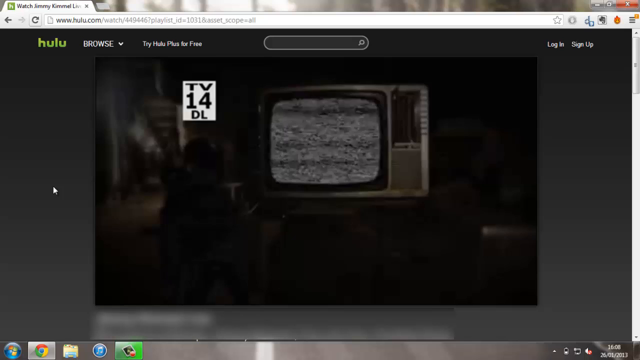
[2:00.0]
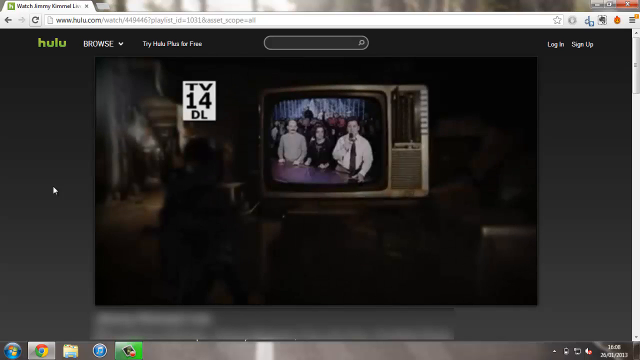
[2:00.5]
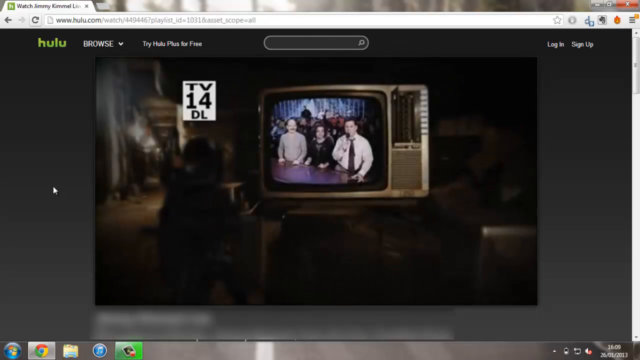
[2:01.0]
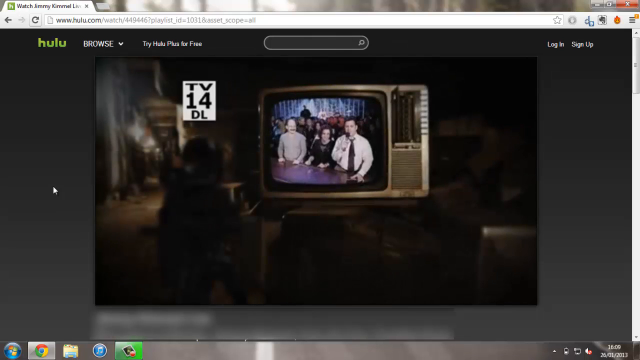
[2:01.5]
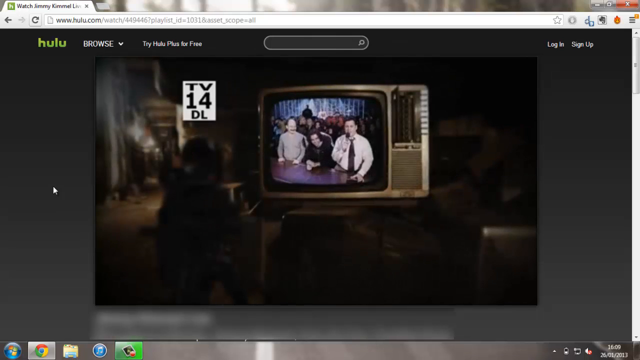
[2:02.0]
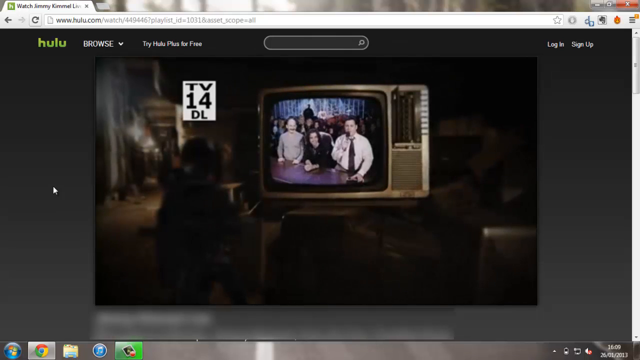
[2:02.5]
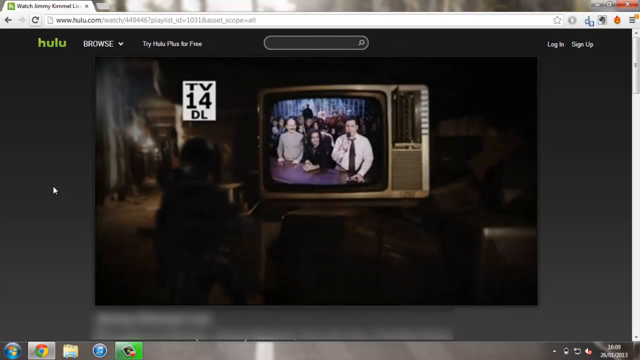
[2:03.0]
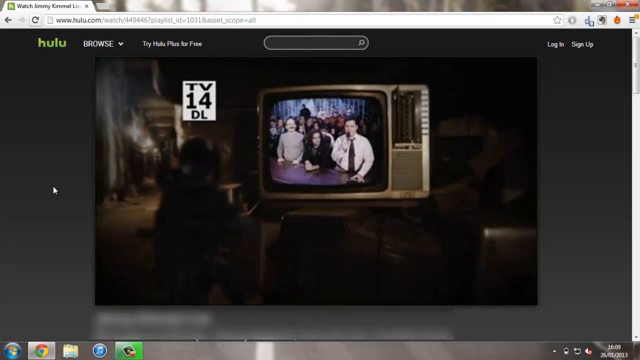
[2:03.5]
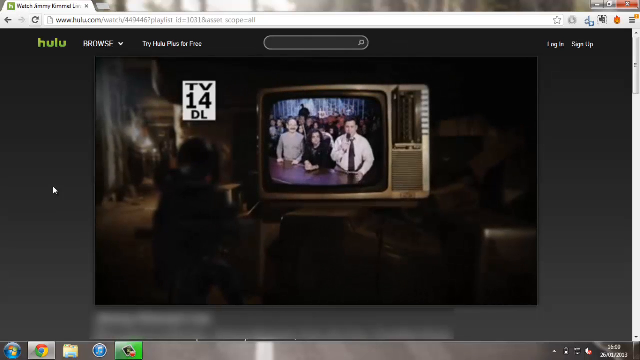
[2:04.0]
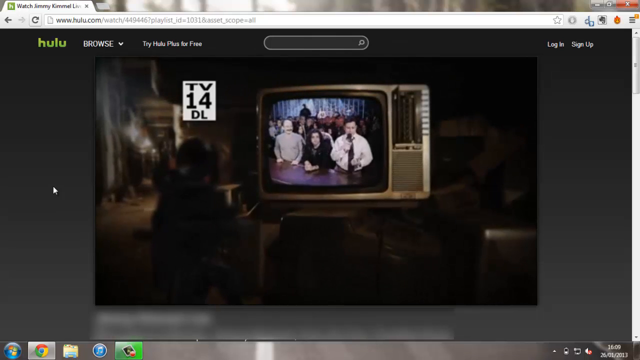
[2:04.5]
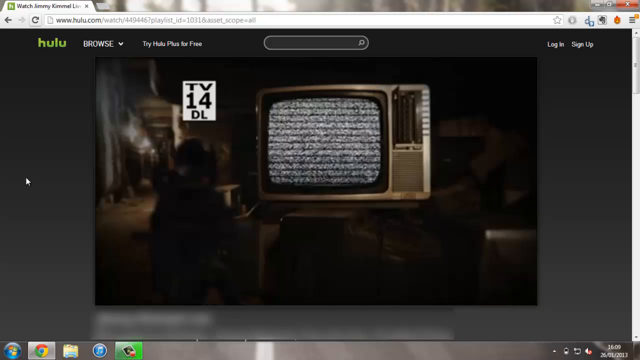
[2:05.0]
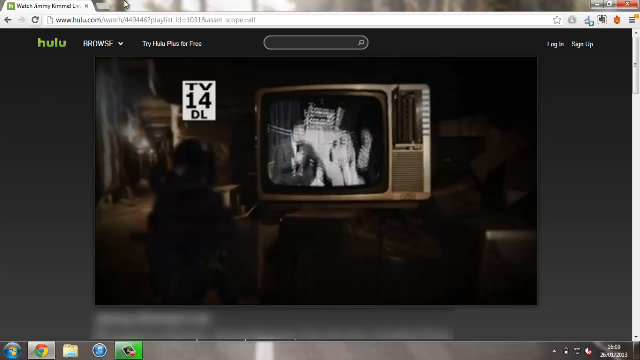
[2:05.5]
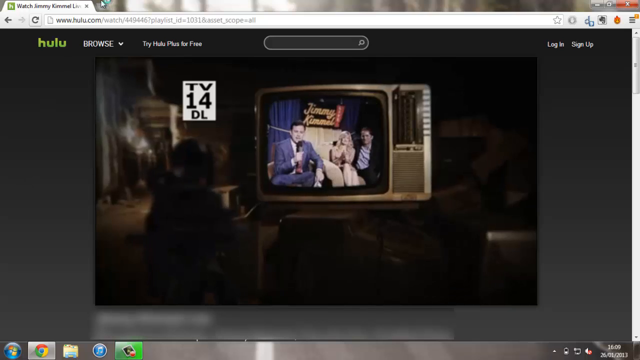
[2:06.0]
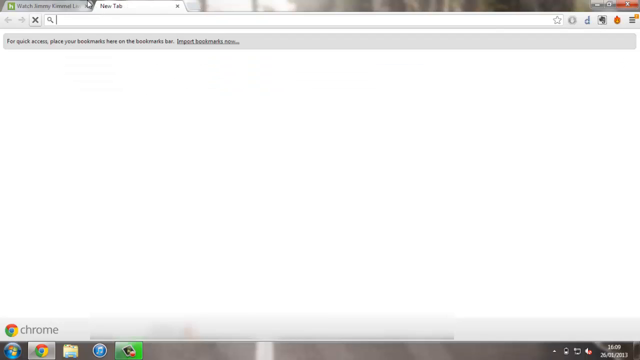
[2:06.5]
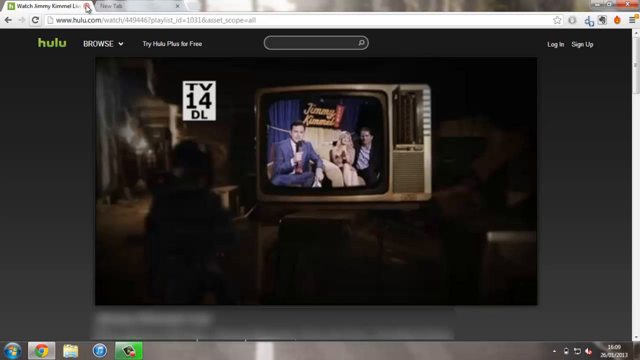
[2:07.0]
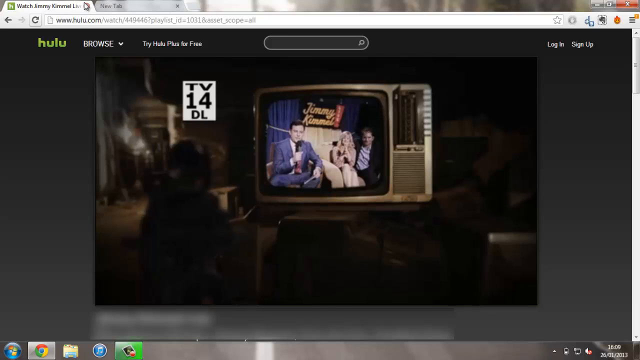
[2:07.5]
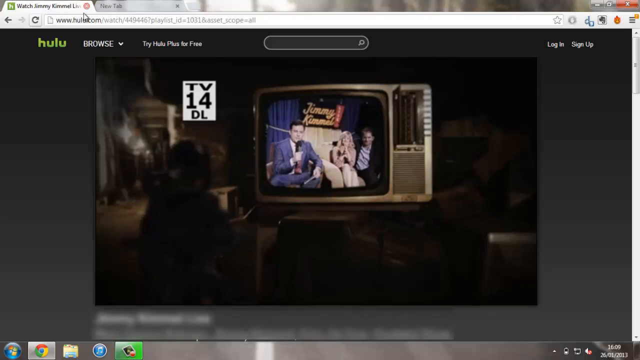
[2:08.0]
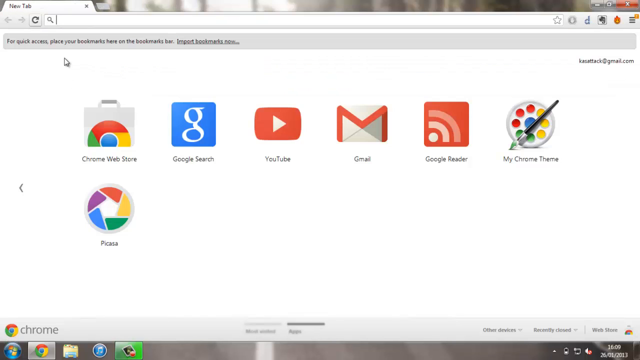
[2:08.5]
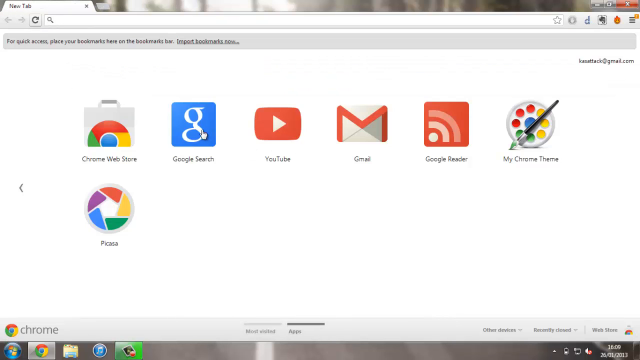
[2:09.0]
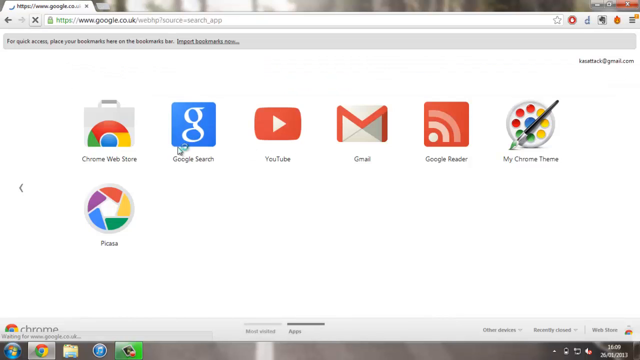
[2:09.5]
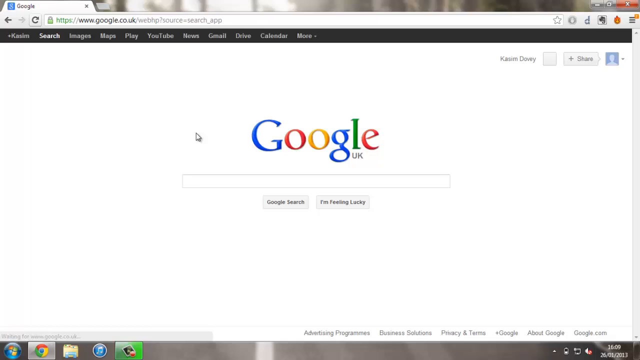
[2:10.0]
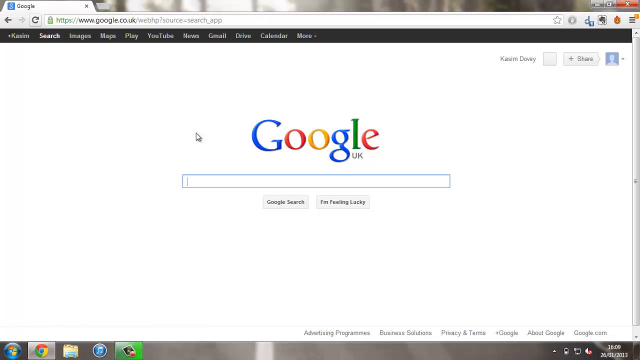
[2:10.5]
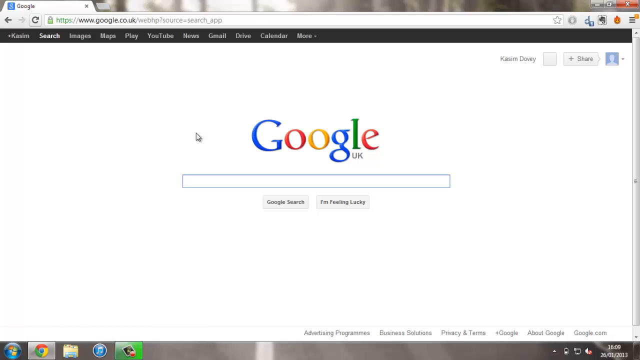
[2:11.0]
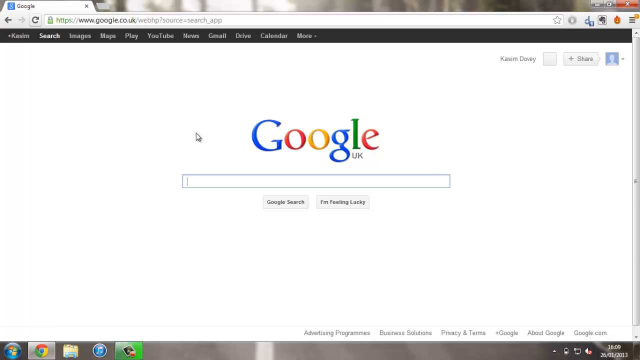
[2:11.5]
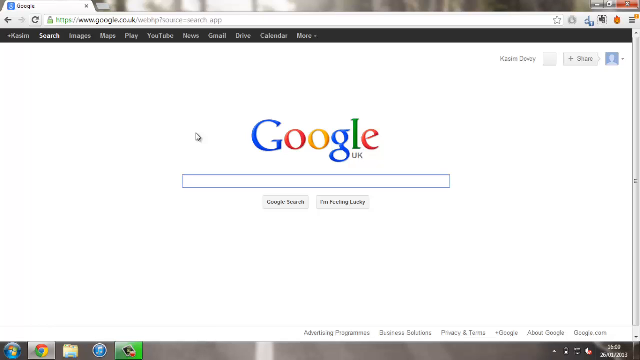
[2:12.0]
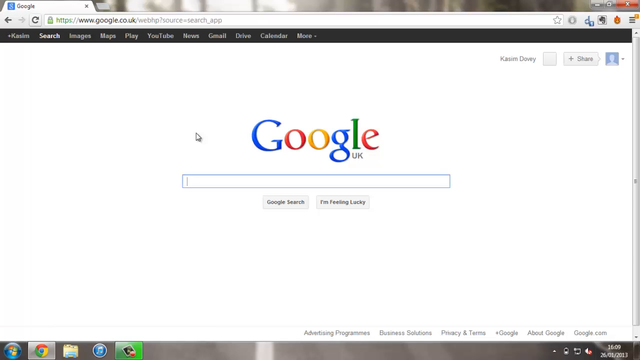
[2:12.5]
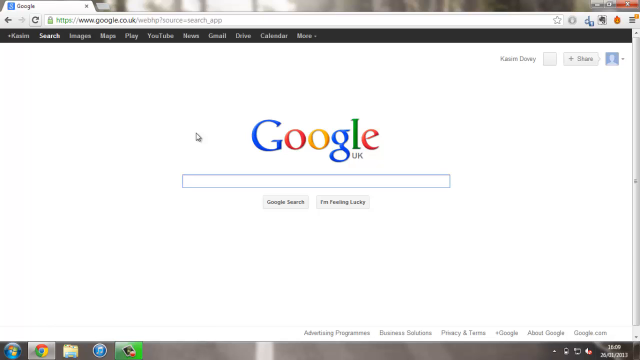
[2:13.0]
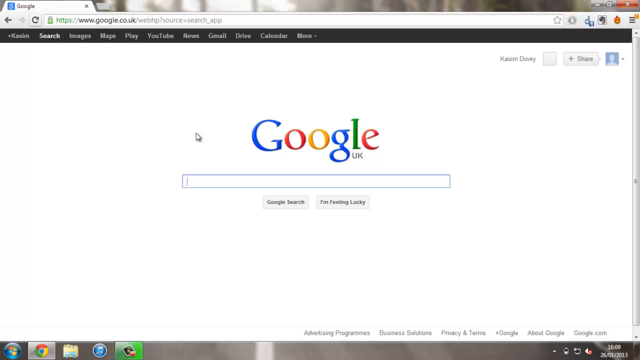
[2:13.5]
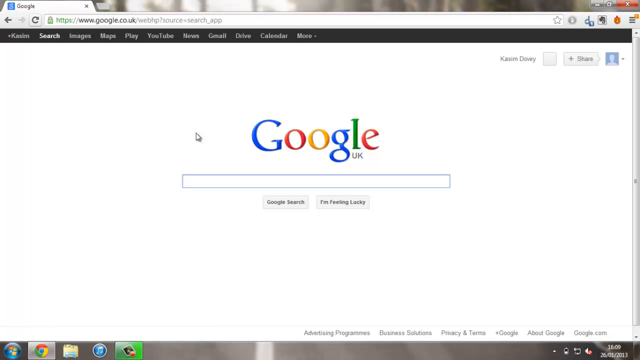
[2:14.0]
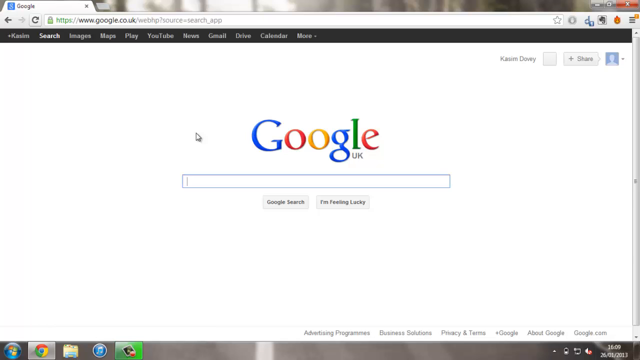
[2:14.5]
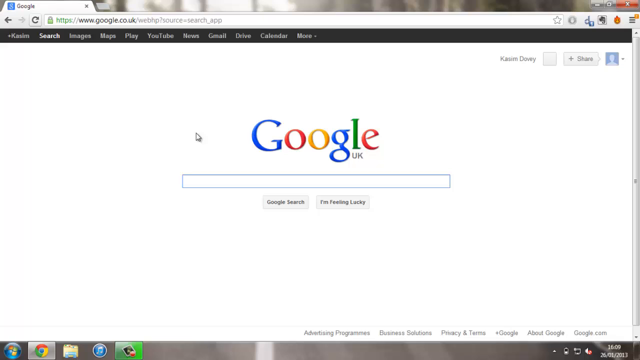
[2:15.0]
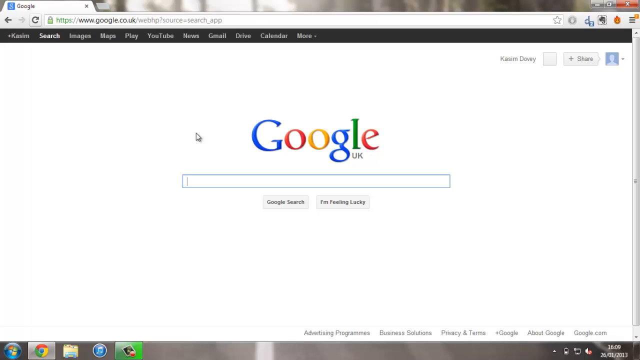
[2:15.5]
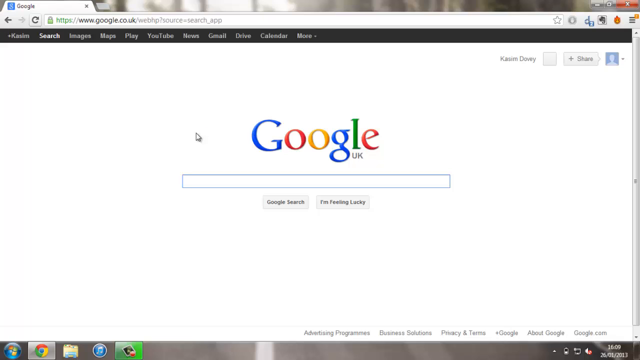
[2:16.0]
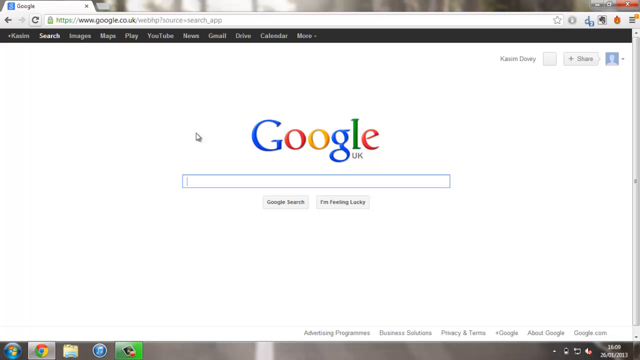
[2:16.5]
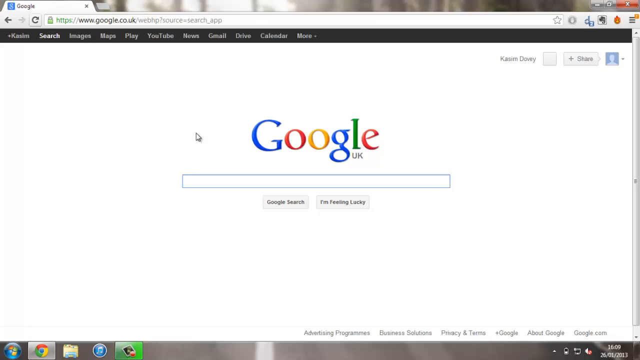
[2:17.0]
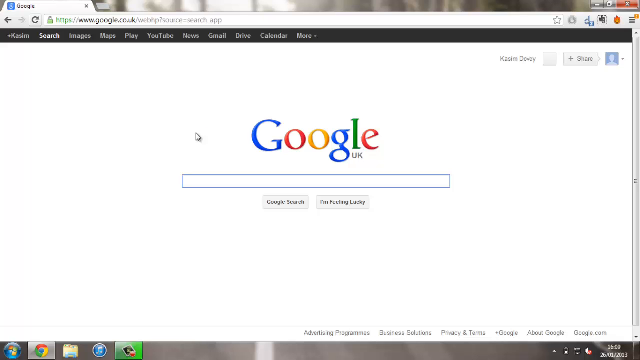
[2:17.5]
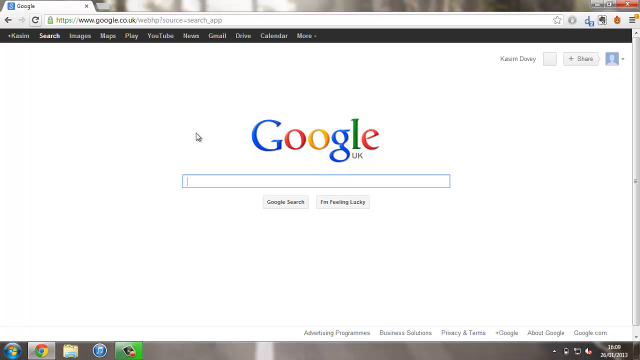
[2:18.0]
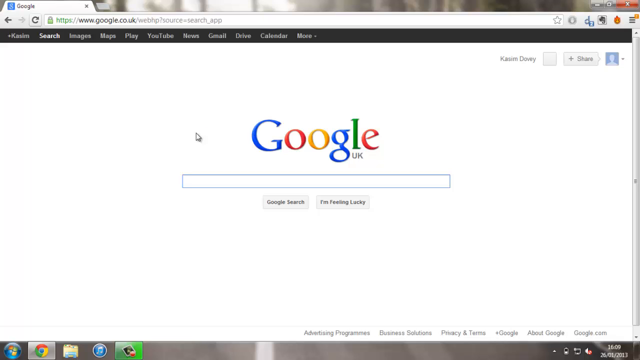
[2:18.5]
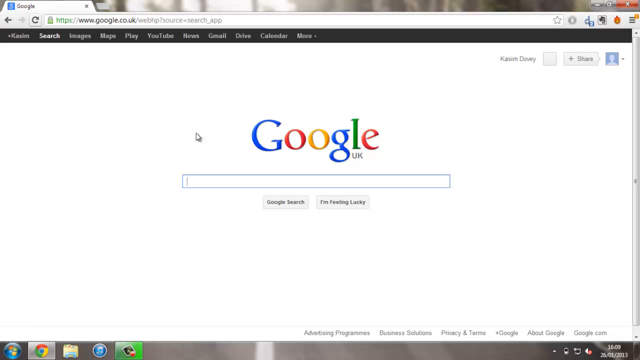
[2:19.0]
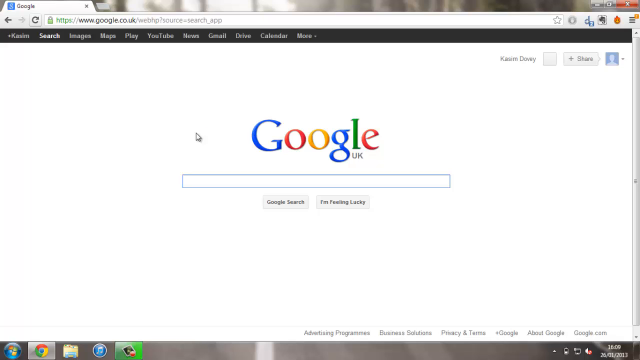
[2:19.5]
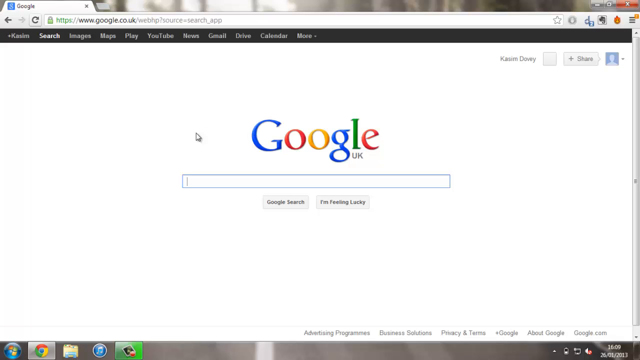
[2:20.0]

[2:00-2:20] The image on the TV comes to life, showing Jimmy Kimmel with a woman and a man to his right, a crowd behind them and a sort of purple desk in front of them. The woman leans slightly into Jimmy and then forward, resting her arms on the desk. The man and woman are both smiling as Jimmy talks into the microphone. He looks at his card, and the image blurs again, cutting to another Jimmy Kimmel episode. Here he is seated in a blue suit and red tie, holding the microphone in his right hand, and to his left on a sofa are two people: a blonde woman with her legs crossed, wearing a dress very similar to her skin color, and to her left, seated, a man in a black suit and white shirt with his arm rested over the couch behind her. Behind them is a Jimmy Kimmel Live sign in yellow letters on a black background, with the word "live" written vertically in a sort of cone shape to the right of the text. The user moves the mouse up and closes this tab, leaving a new tab, and clicks the blue Google search icon. The user stares at the screen for five seconds with the mouse hovering to the left of the Google UK logo while the text cursor flickers, waiting for input.